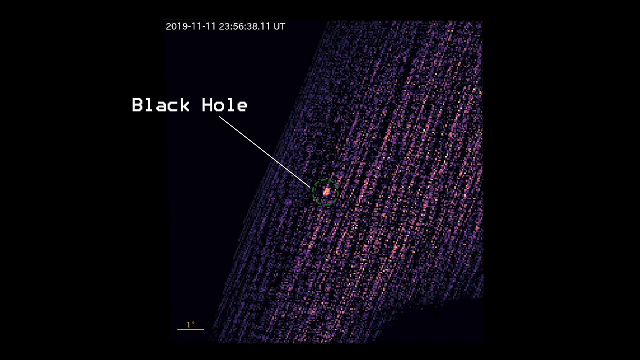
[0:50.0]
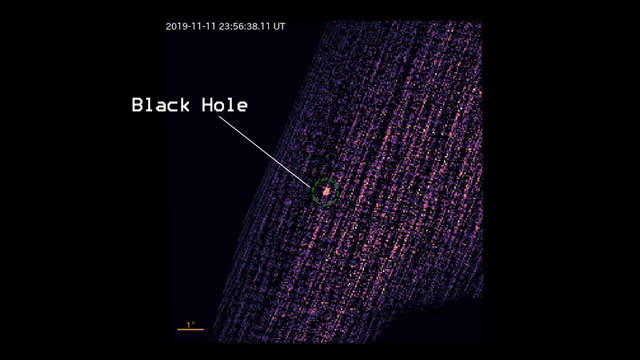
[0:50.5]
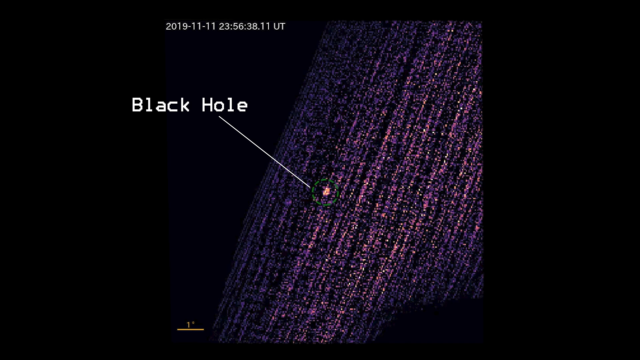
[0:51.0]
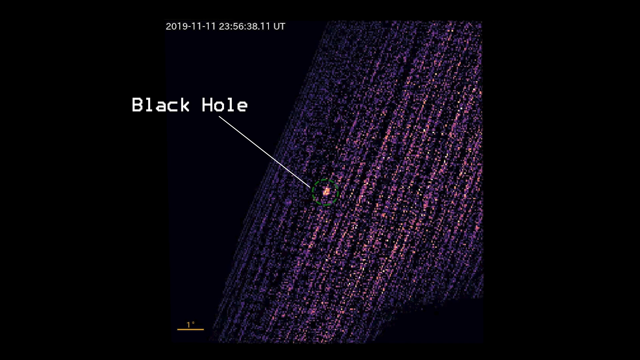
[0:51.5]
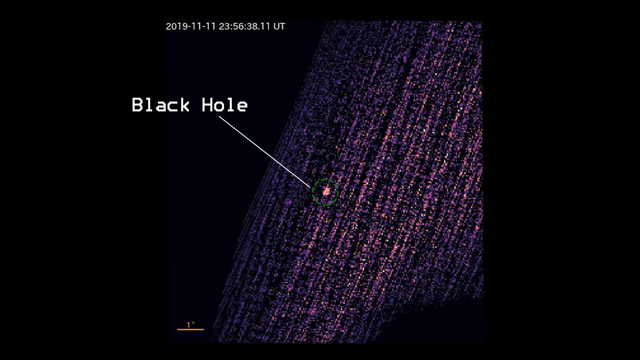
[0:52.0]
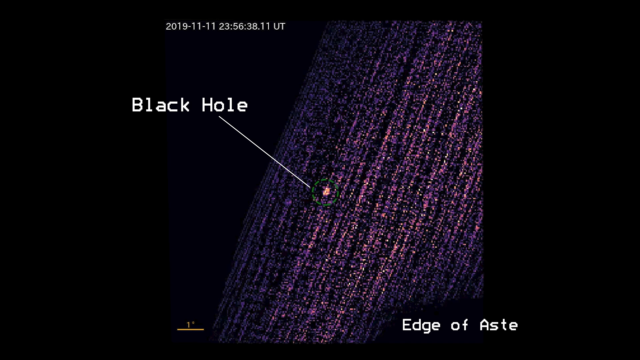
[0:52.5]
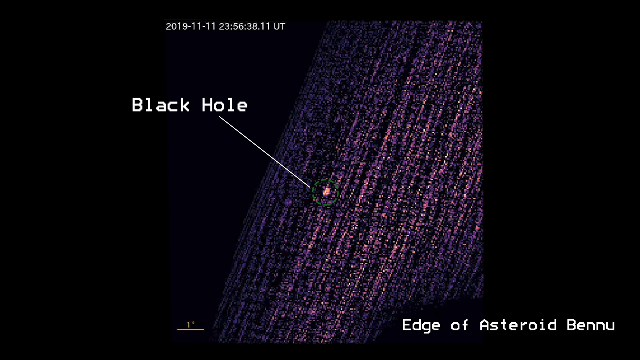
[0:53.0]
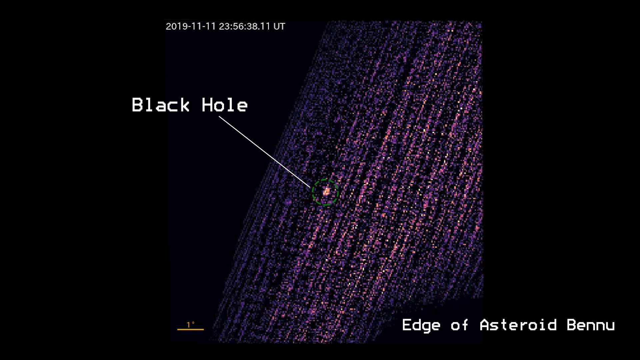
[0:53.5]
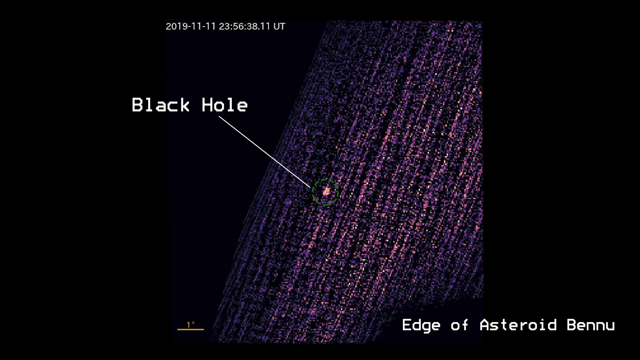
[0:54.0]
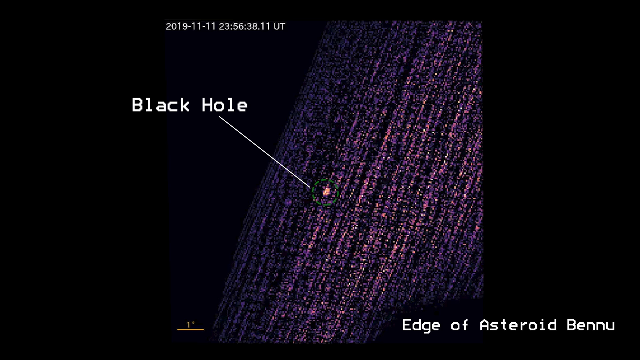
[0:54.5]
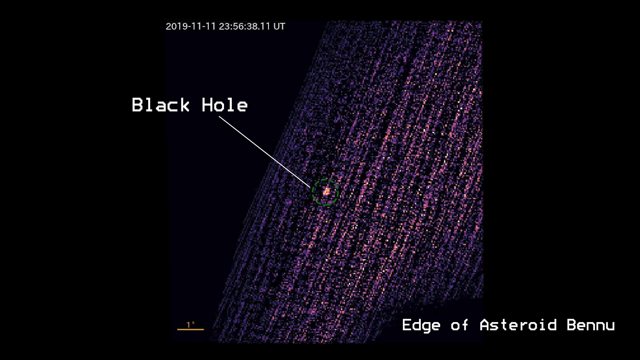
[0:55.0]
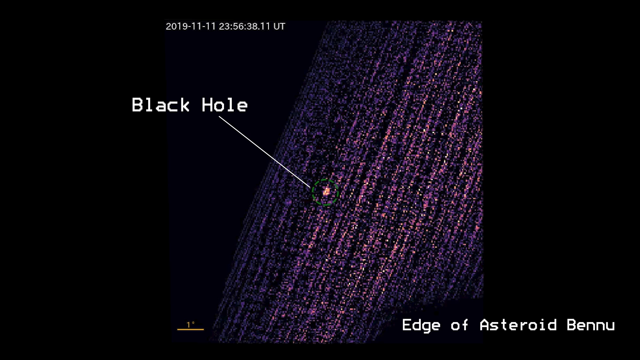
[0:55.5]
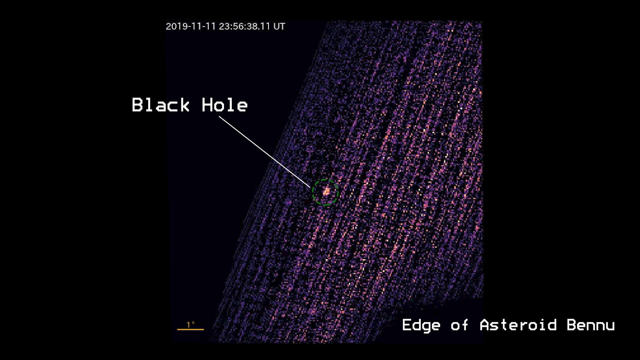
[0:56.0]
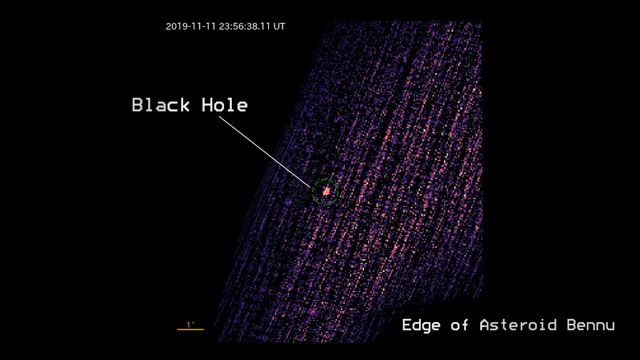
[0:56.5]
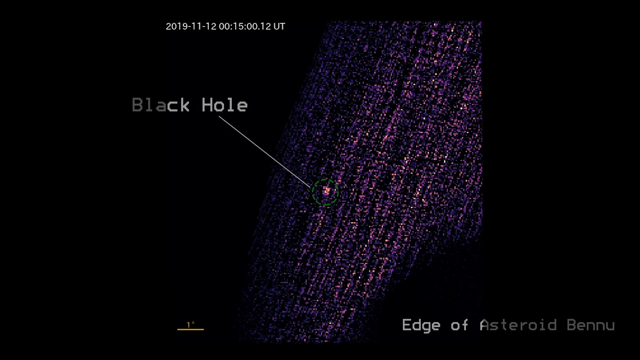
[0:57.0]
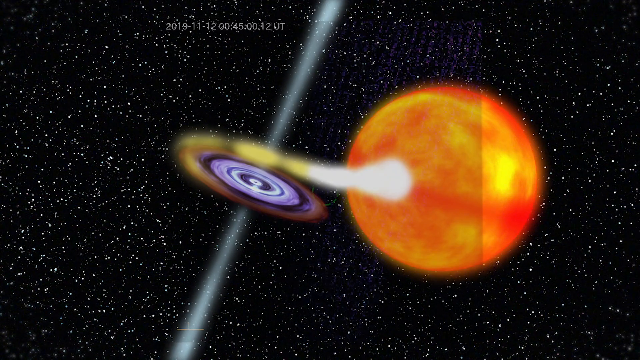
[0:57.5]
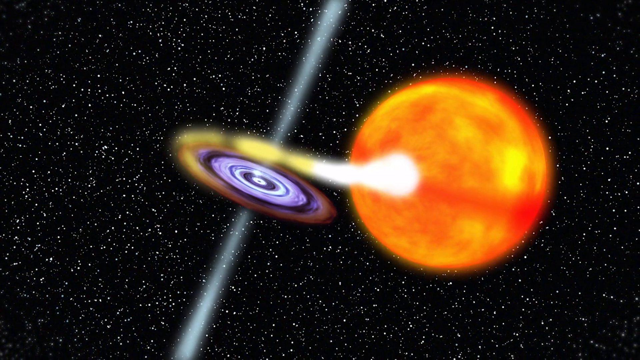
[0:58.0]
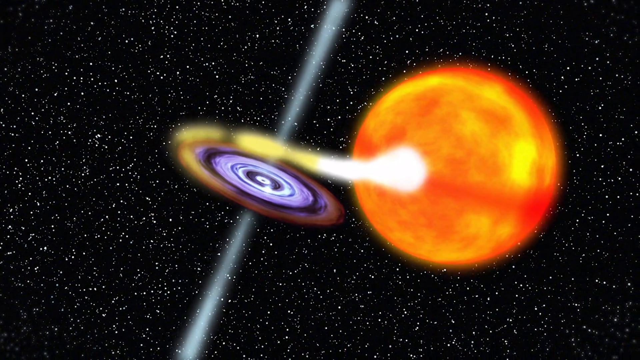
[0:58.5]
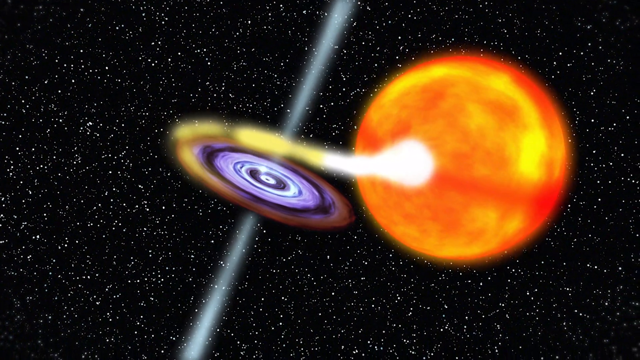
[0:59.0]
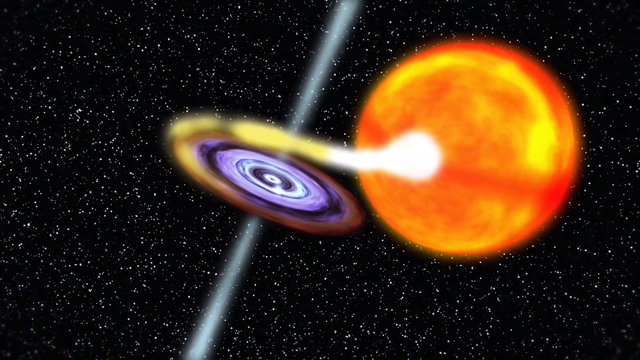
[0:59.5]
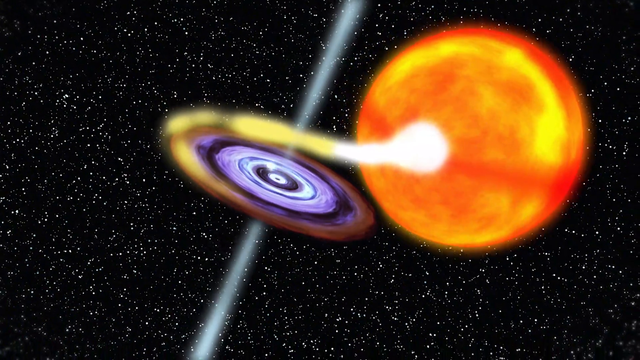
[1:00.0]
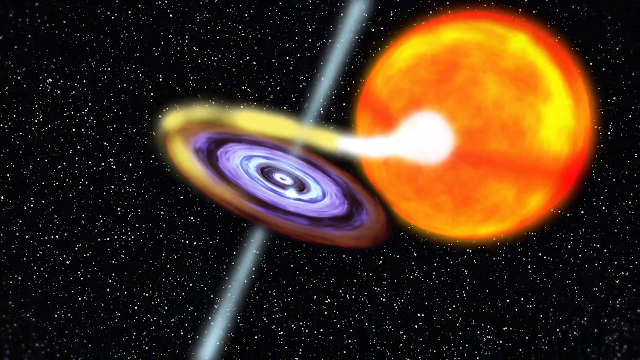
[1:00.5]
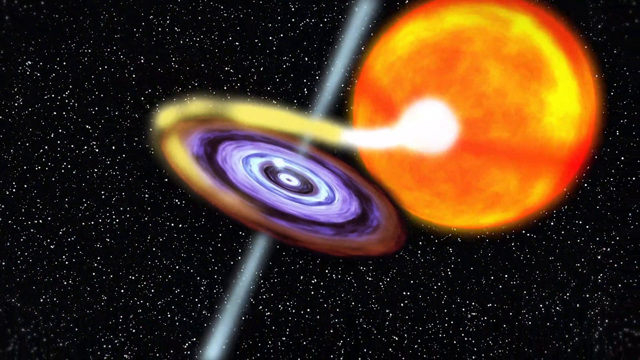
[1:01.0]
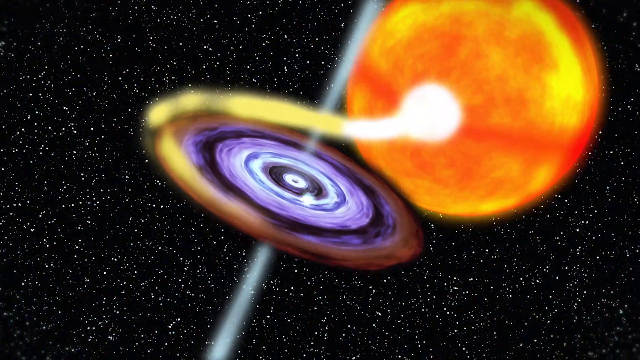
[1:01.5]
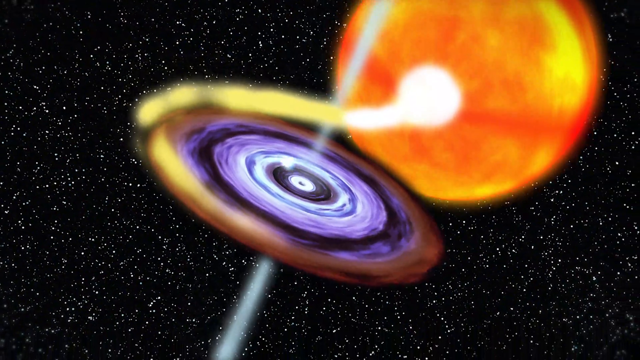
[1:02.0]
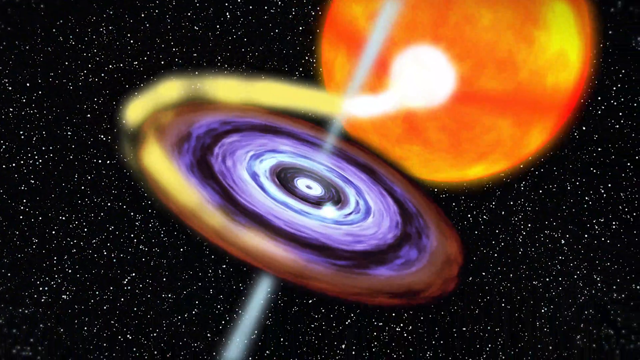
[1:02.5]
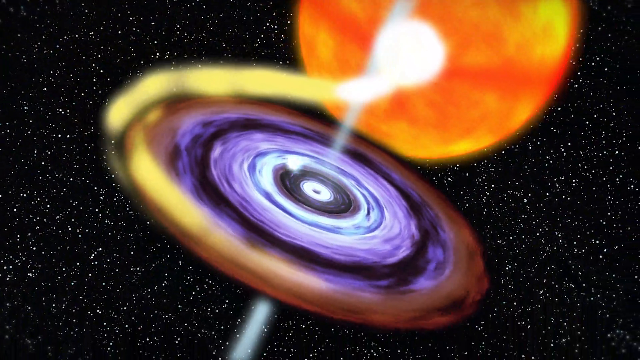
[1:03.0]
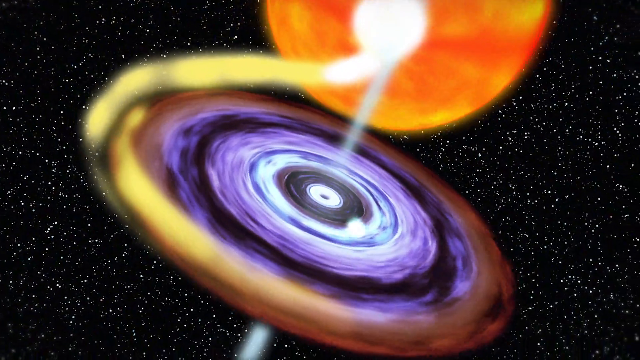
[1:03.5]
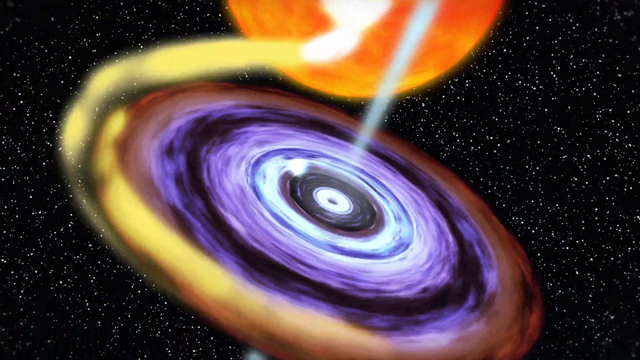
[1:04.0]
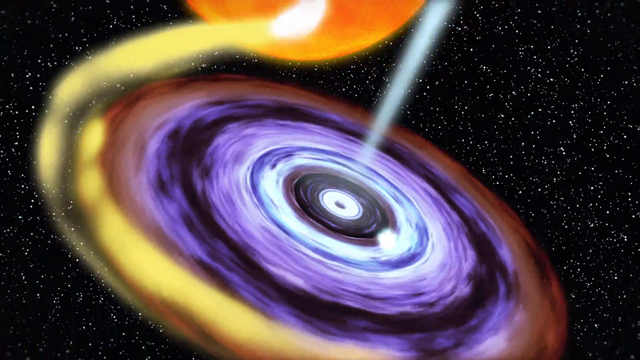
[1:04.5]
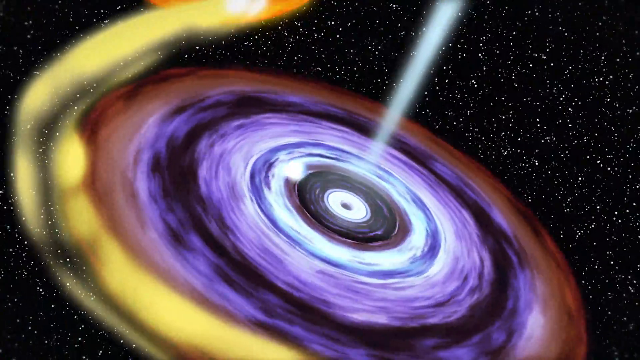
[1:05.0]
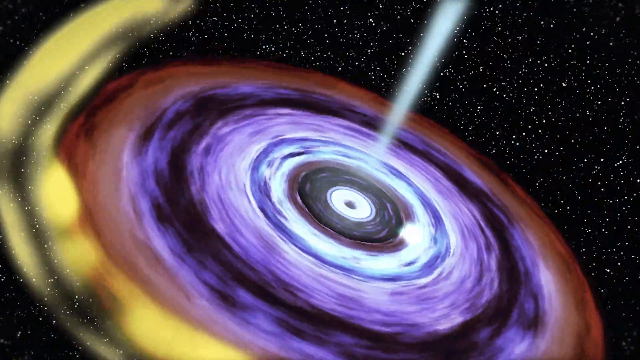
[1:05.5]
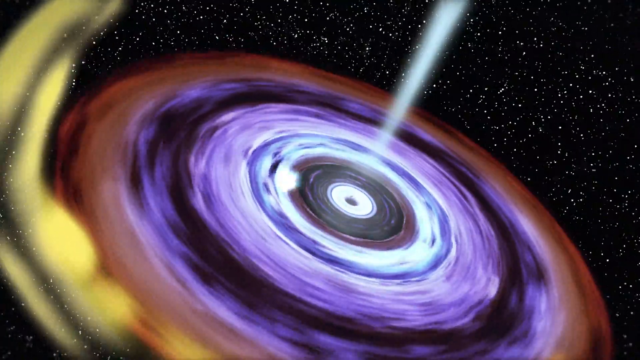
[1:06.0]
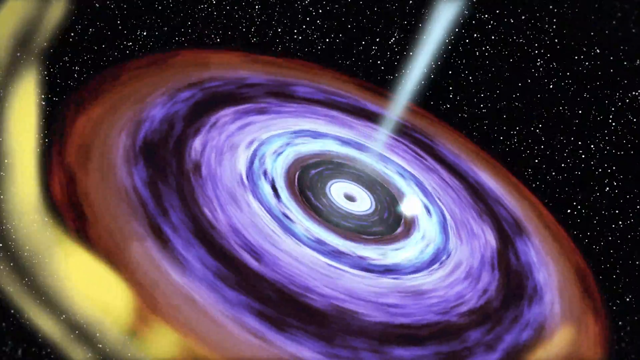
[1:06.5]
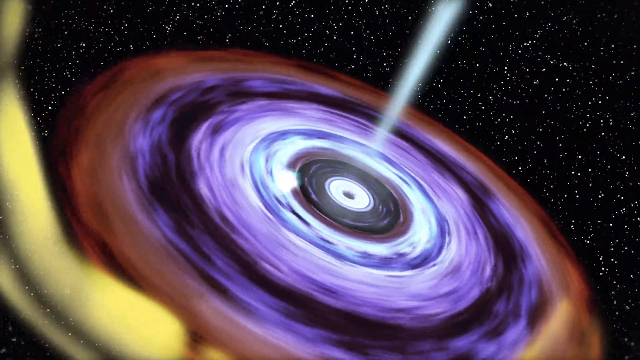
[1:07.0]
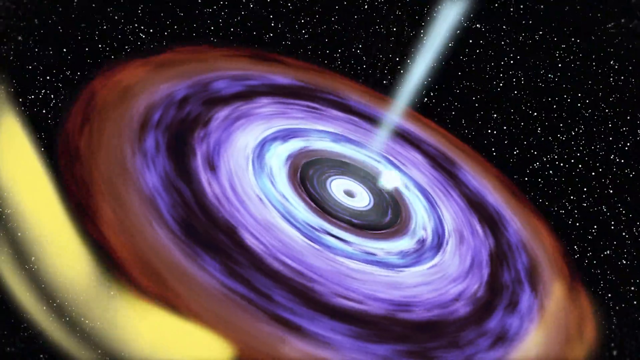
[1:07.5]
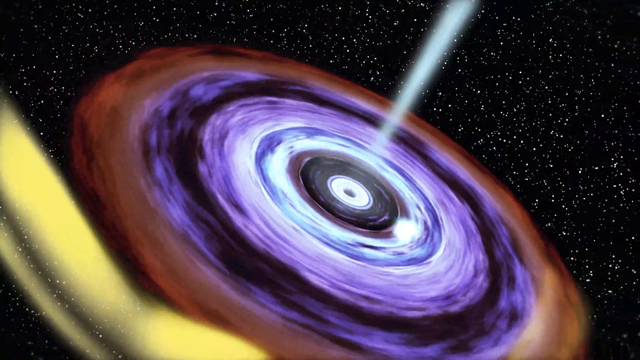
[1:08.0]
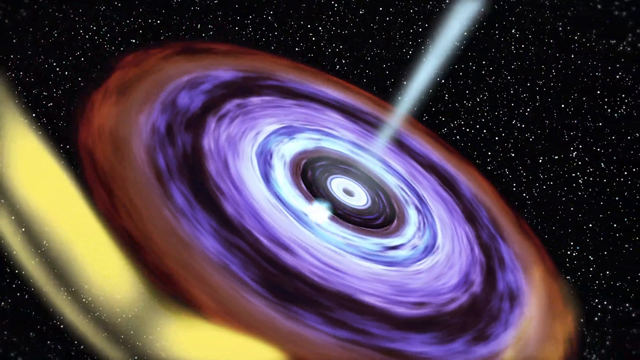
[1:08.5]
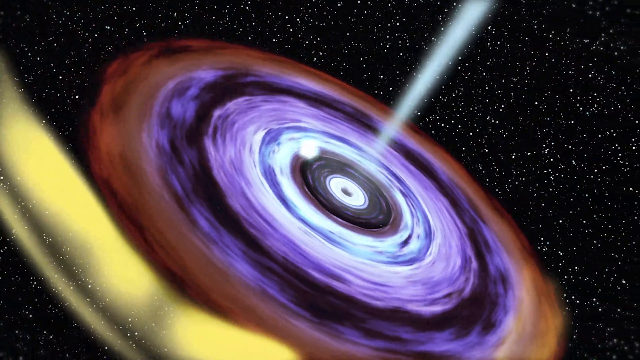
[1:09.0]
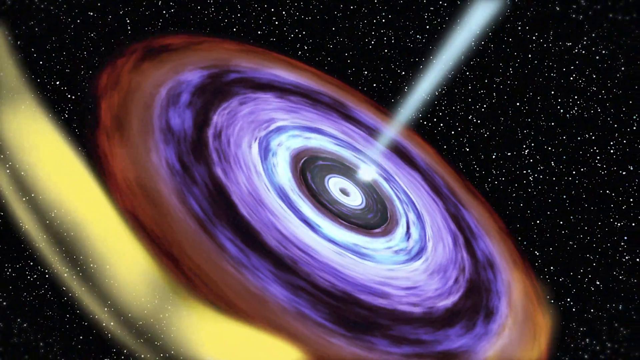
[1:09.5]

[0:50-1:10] Footage shows the black hole in the green highlighted area on the purple stripes, which are made up of small purple pixelated shapes running diagonally up the page. The black hole appears as a lighter irregular dot with an arrow, inside a green circle that is not solid. The title of the page is "Edge of the Asteroid Bennu". The date is shown as "2019 11 11" and the time as "23 56 38 11 UT". Next is another galaxy with lots of stars and an orange planet with a looped, illuminated attachment that forms into a disc made up of gold, purple and white circles. A white ball goes around and around a central object in the middle of the disc. The disc rotates as the planet and disc move towards the camera. A light beam seems to come from the centre of the disc.